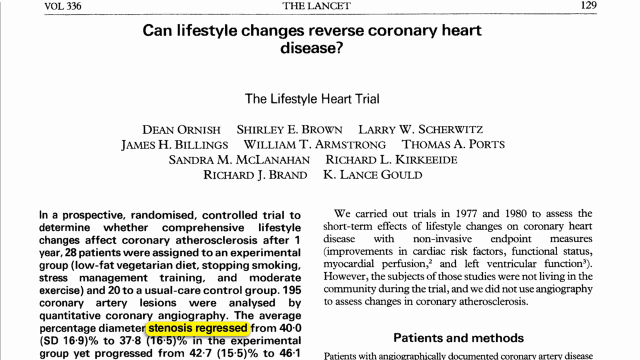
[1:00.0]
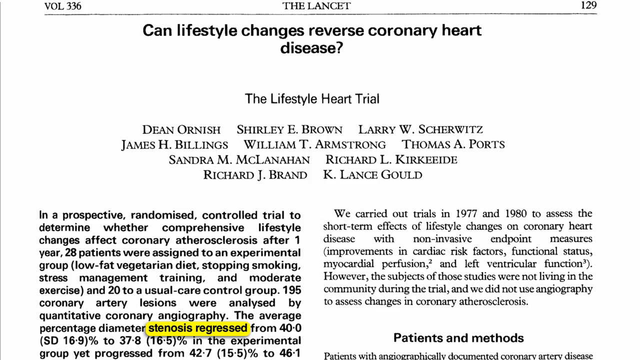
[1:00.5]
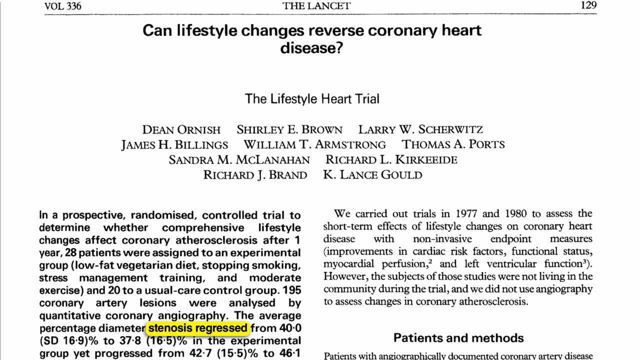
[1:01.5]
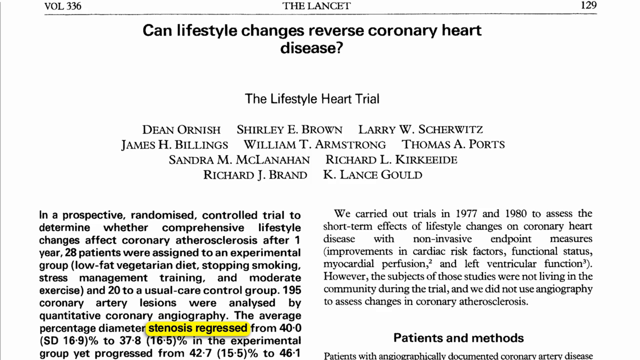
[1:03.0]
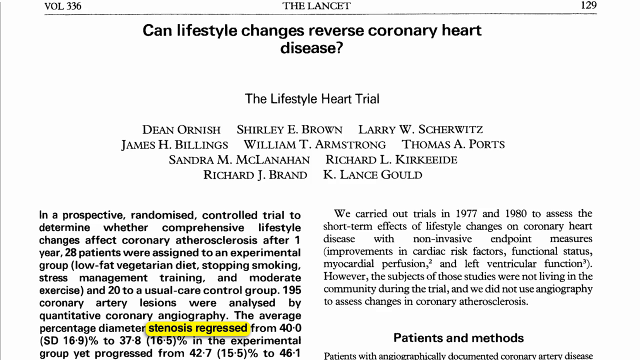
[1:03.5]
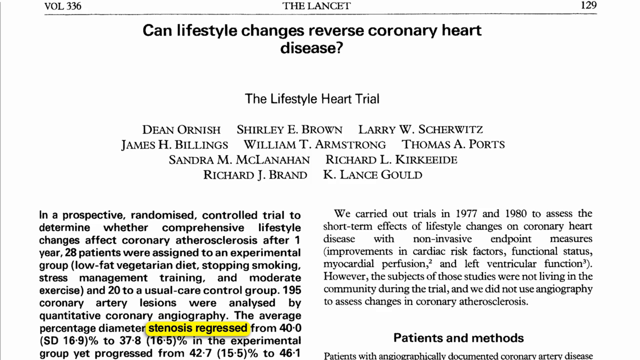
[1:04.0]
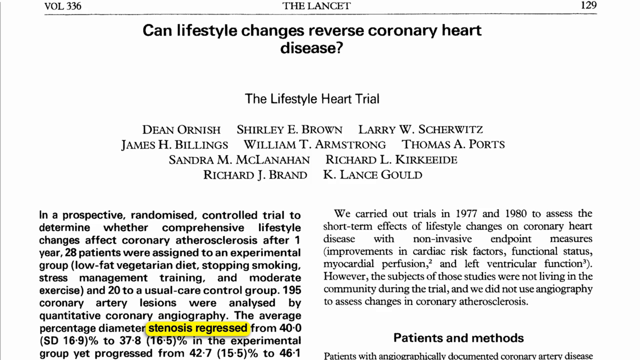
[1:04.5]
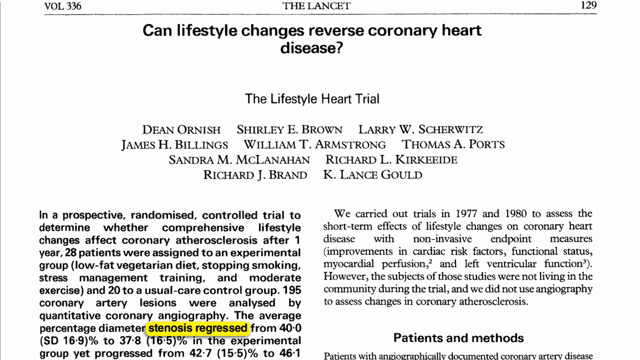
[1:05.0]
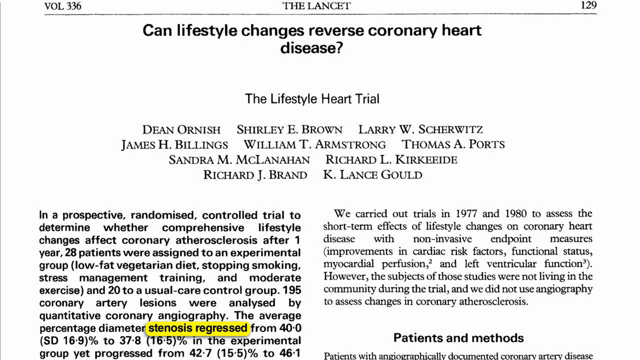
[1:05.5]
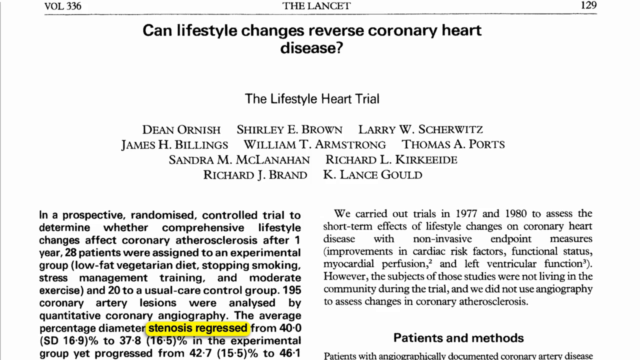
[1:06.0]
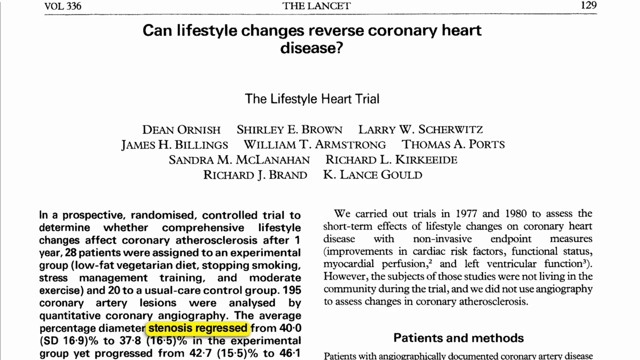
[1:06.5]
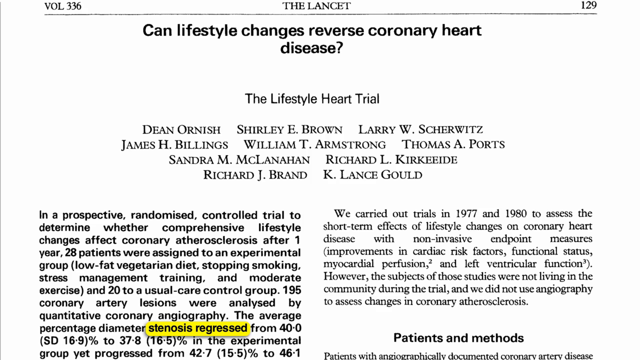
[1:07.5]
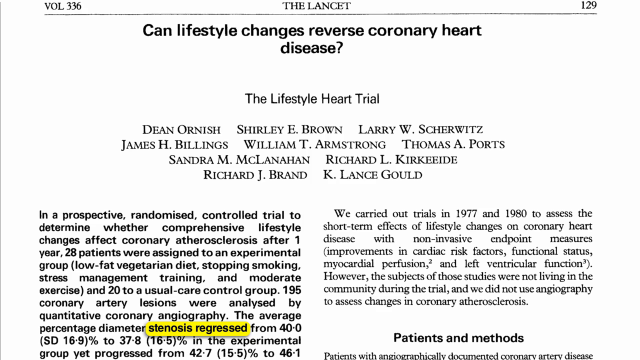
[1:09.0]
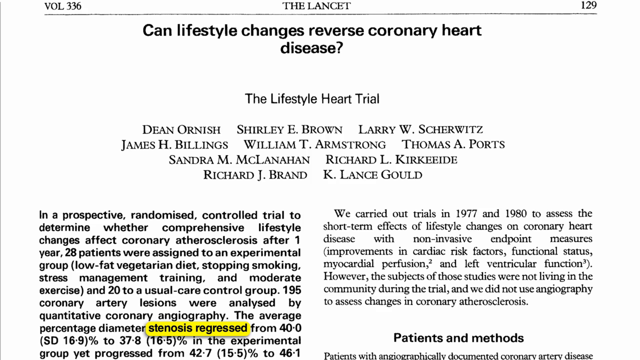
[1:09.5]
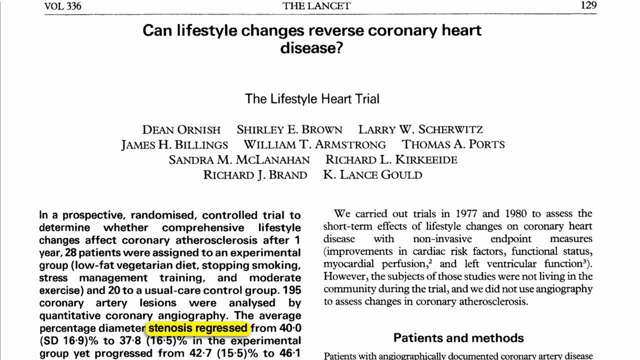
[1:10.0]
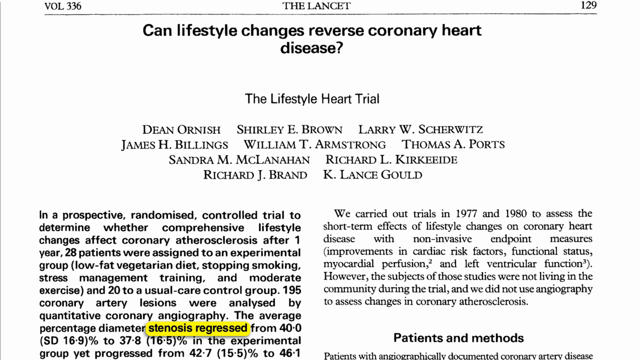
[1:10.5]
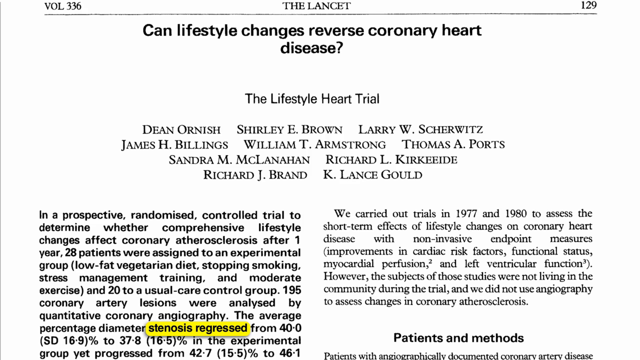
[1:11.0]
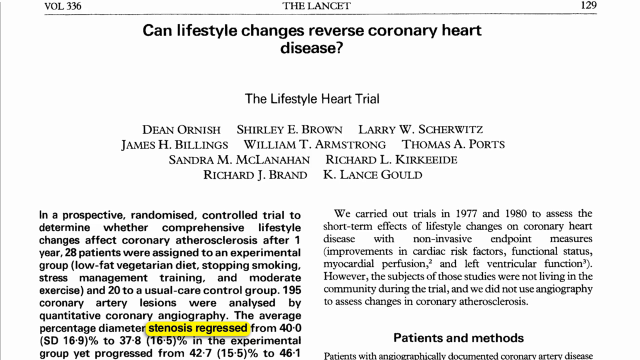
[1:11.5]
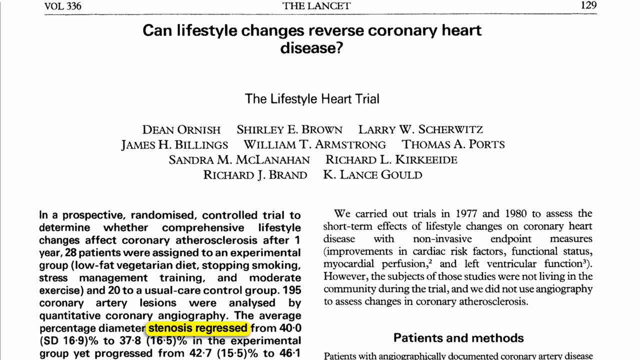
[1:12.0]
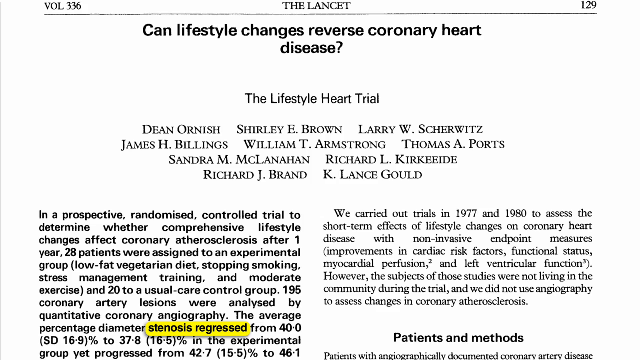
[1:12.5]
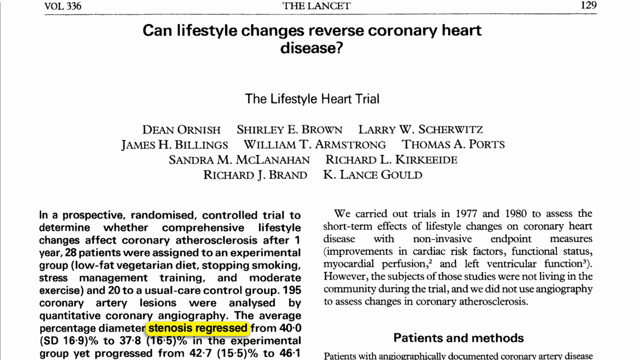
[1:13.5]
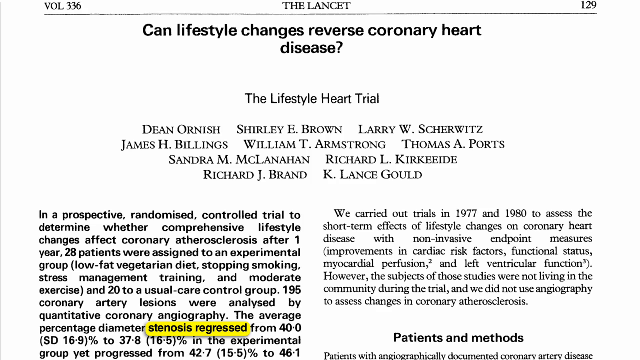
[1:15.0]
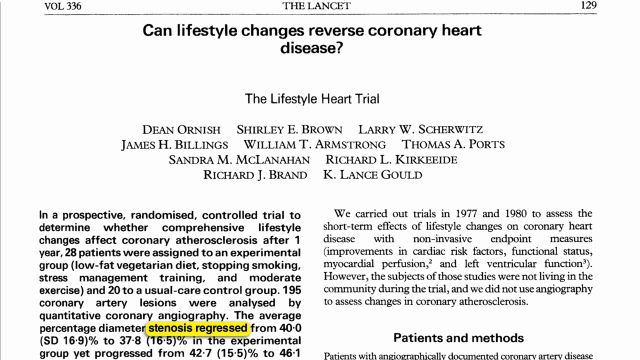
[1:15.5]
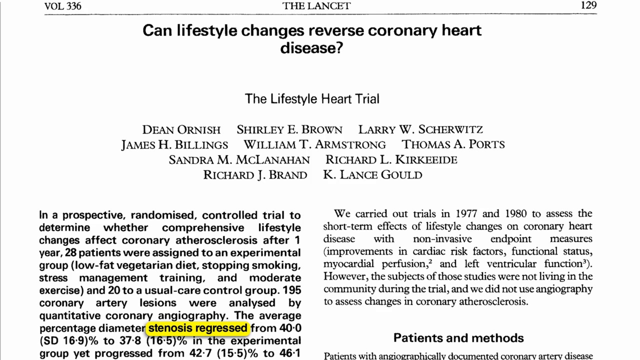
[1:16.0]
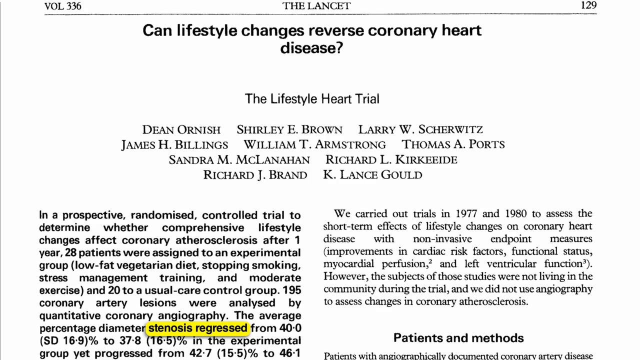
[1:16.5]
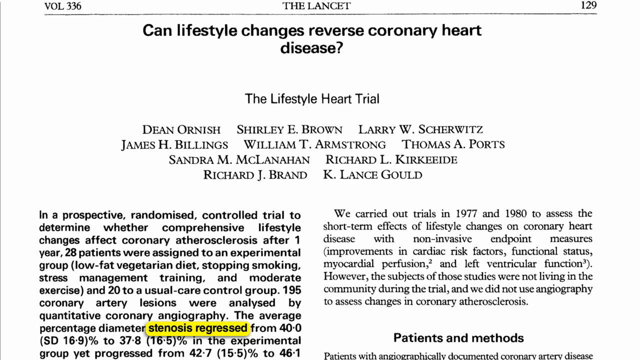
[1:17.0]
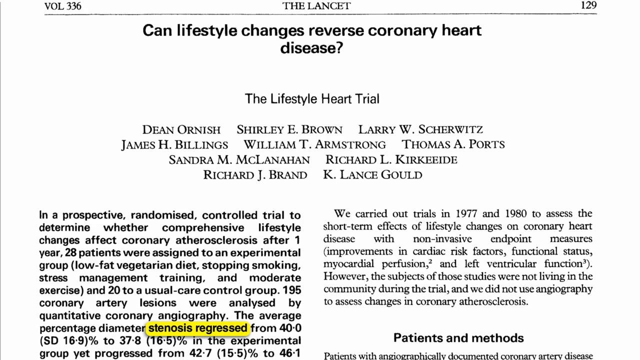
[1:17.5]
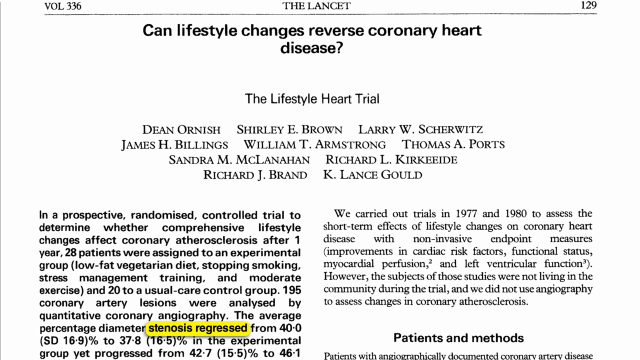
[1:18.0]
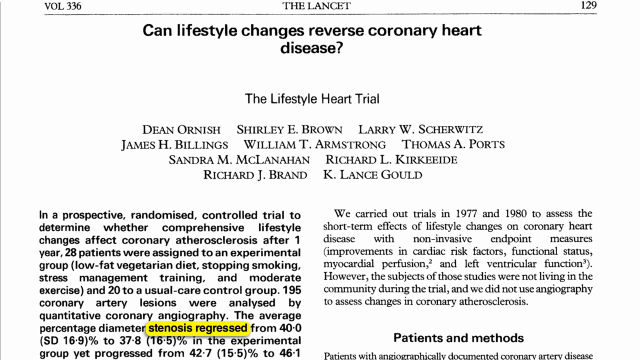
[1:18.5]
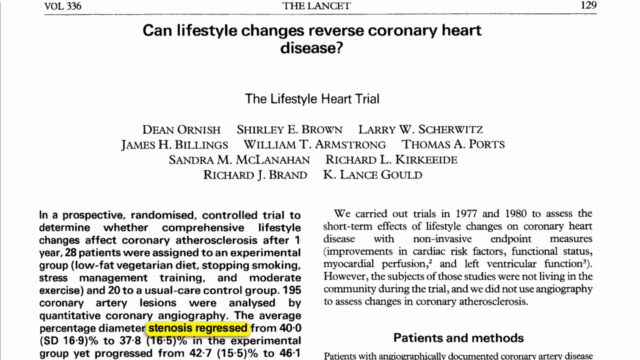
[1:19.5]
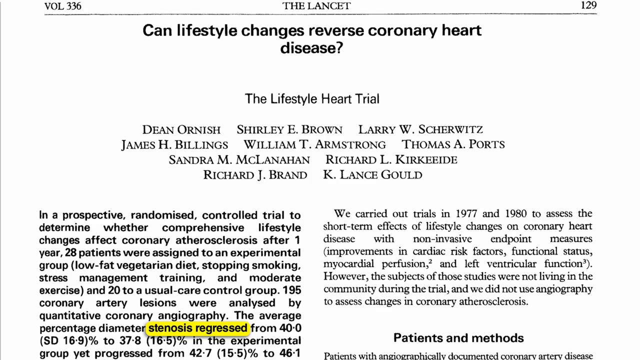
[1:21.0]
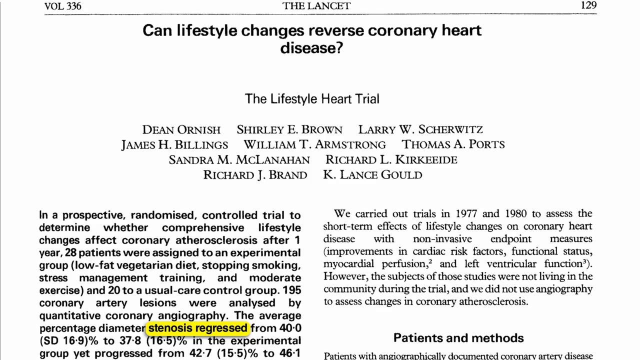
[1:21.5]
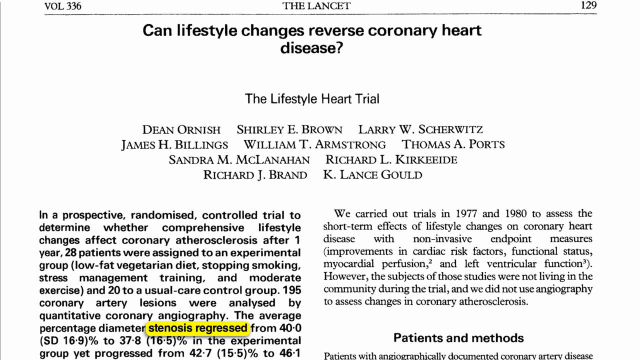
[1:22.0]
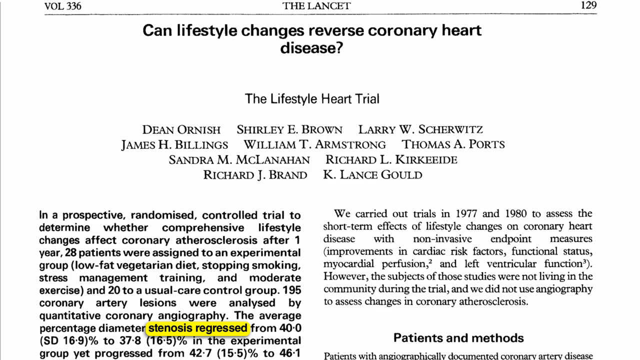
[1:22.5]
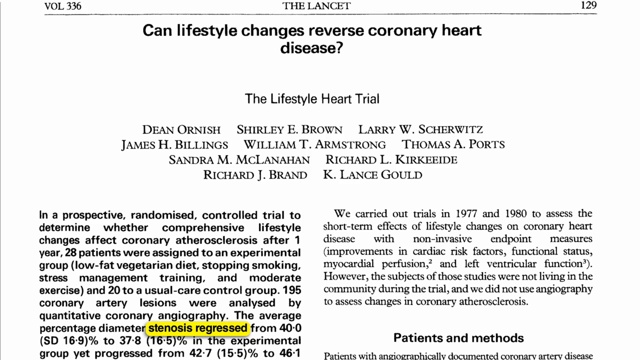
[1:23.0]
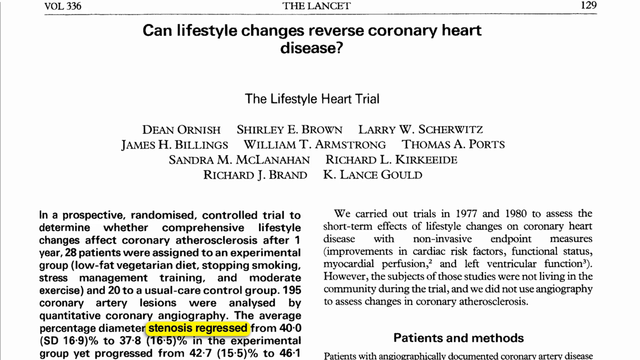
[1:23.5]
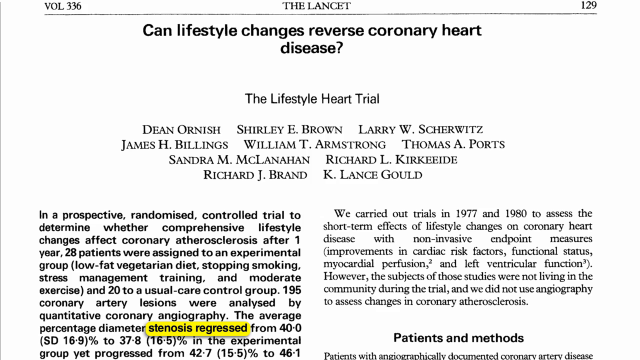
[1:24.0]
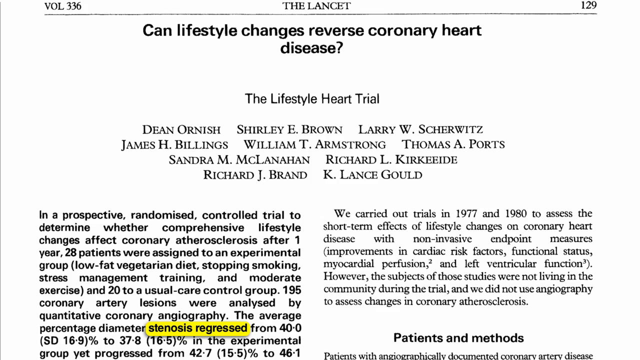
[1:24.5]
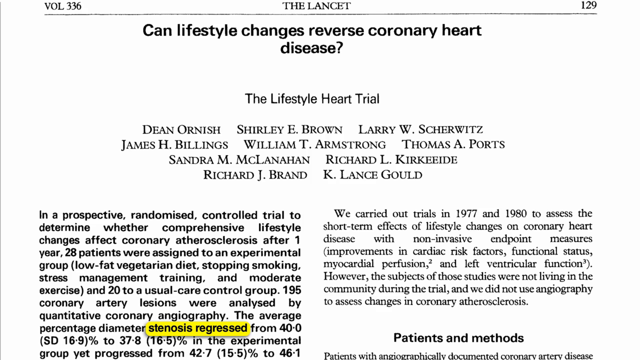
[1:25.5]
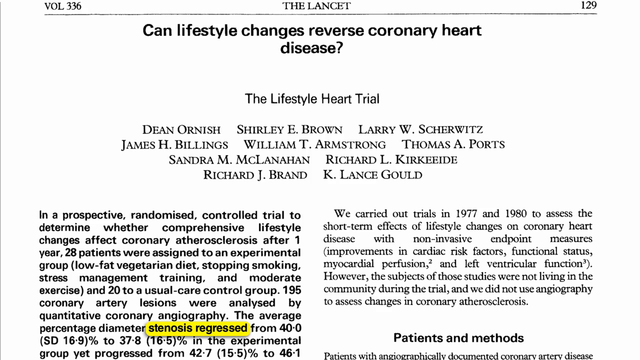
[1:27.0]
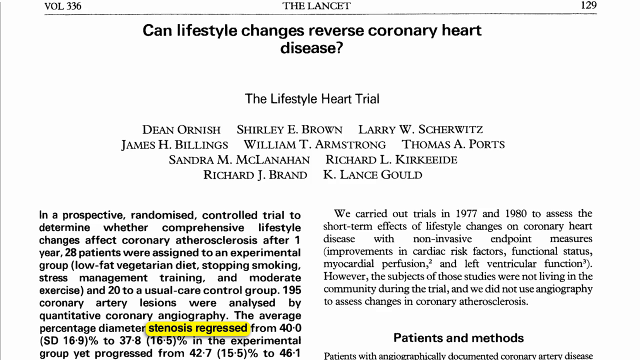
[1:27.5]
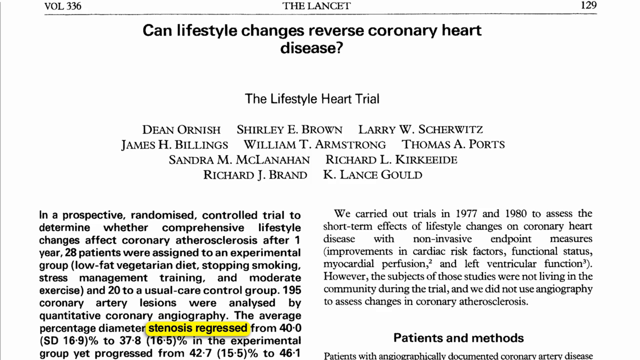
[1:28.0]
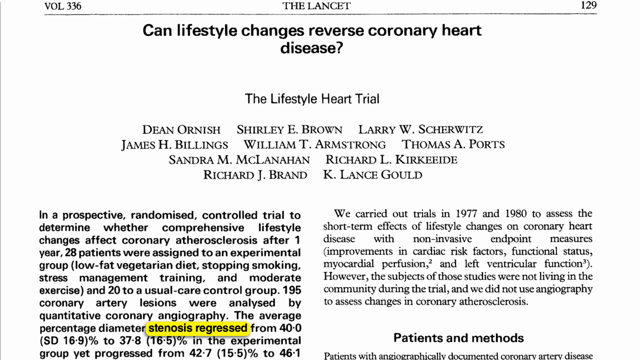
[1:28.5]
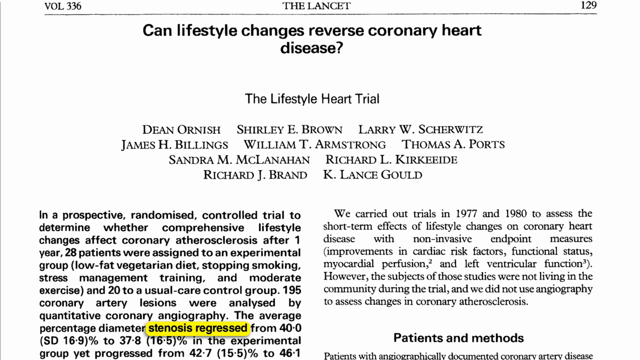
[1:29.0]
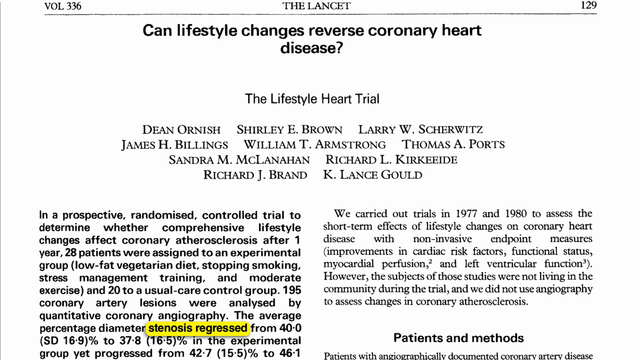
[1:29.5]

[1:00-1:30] The same article is shown from the top. On the left side, two words, "stenosis" and "regress", are highlighted in yellow, and that section is cut off. The left-side text reads "28 patients were assigned to an experimental group (low-fat vegetarian diet, stop smoking, stress management training and moderate exercise)", "195 coronary artery lesions were analyzed by quantitative coronary angiography", and "the average percentage diameter" going "from 40.0 (16.9) percent to 37.8 (16.5) percent in an experimental group" and "progress from 42.7 (15.5) percent to 46.1".